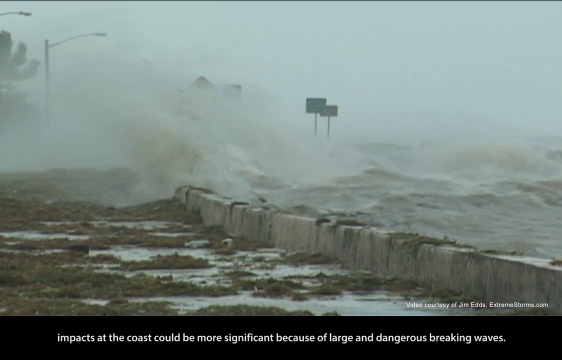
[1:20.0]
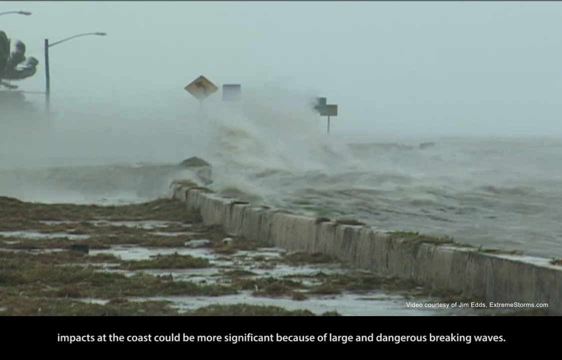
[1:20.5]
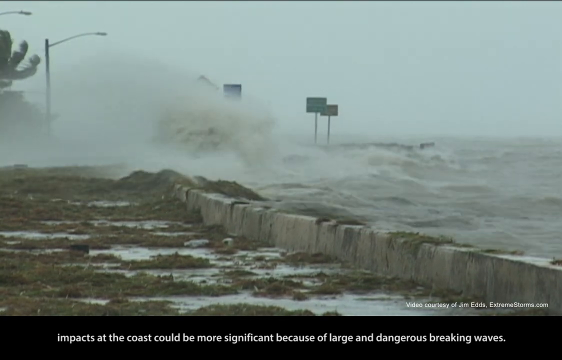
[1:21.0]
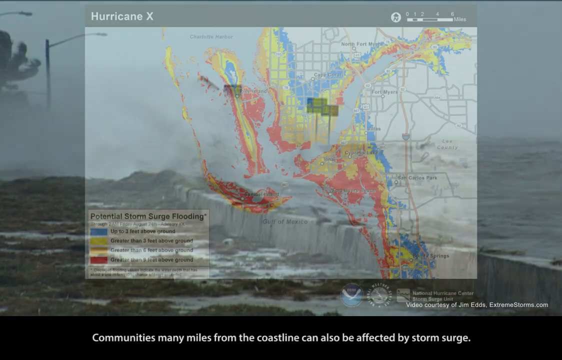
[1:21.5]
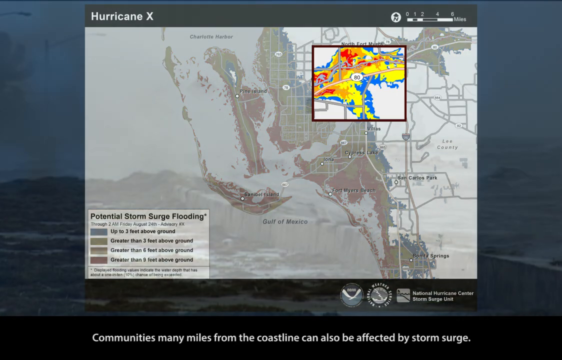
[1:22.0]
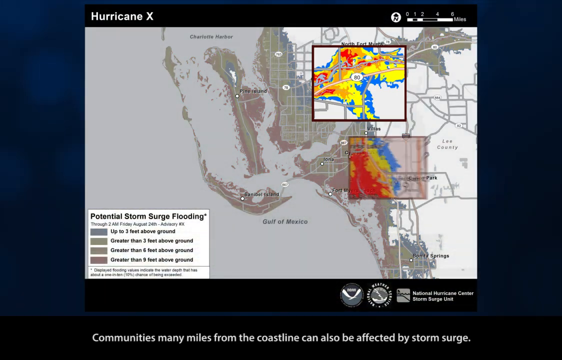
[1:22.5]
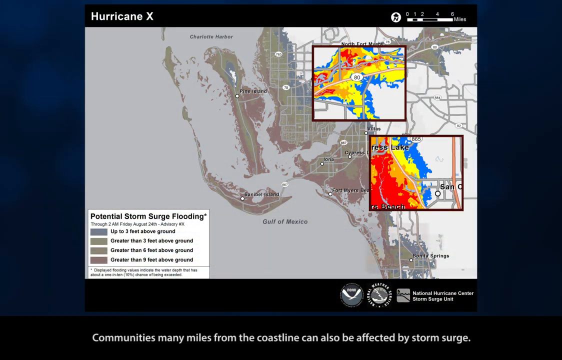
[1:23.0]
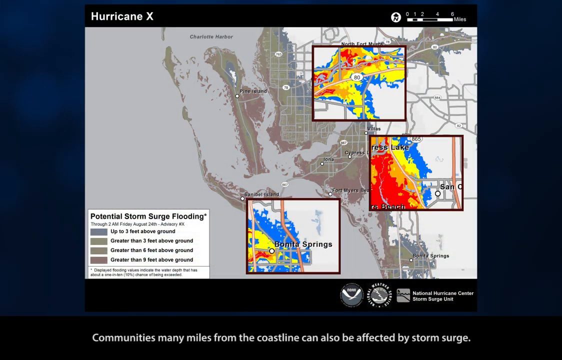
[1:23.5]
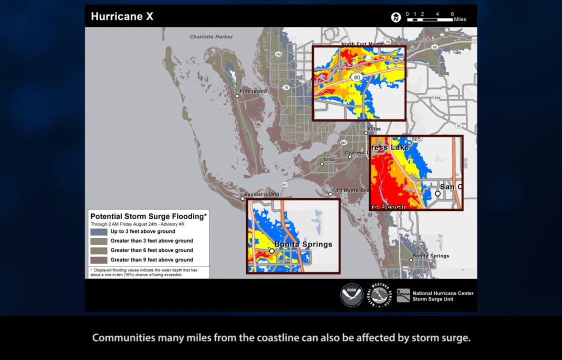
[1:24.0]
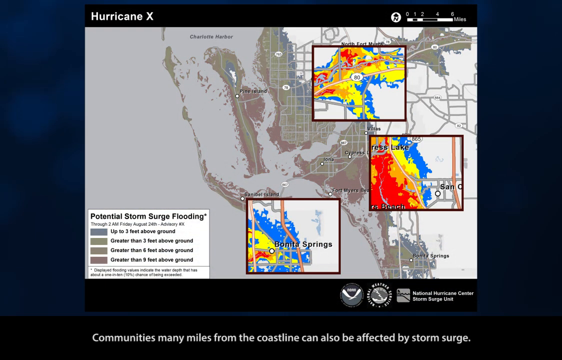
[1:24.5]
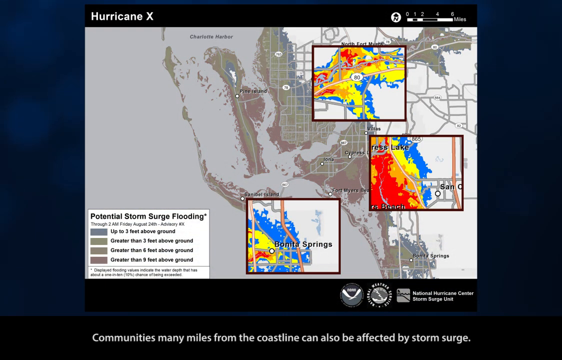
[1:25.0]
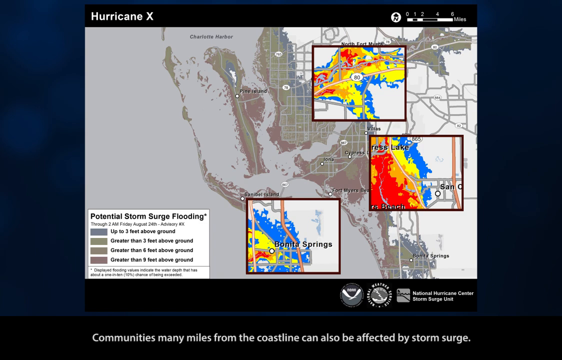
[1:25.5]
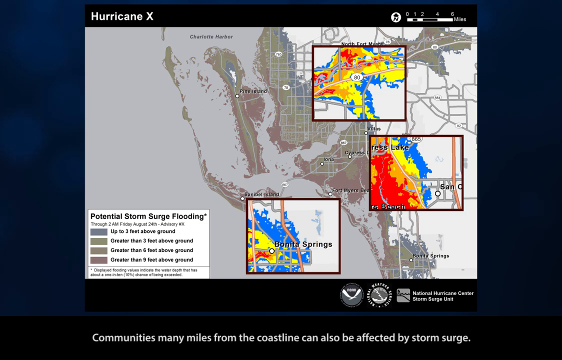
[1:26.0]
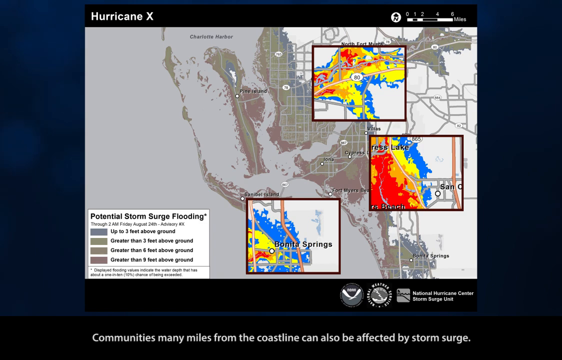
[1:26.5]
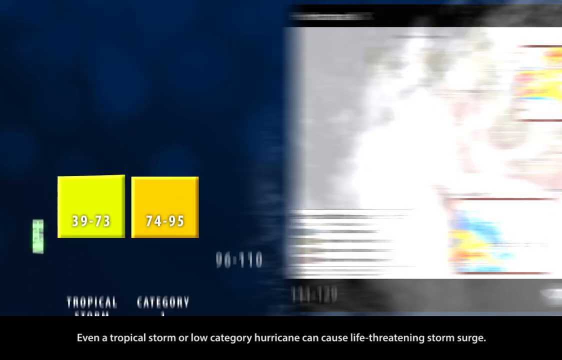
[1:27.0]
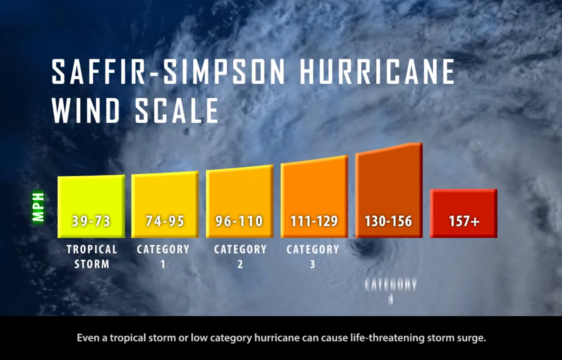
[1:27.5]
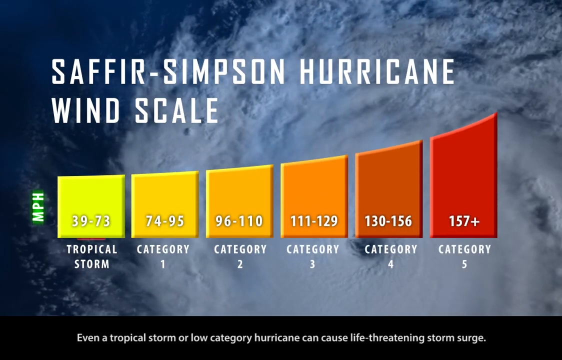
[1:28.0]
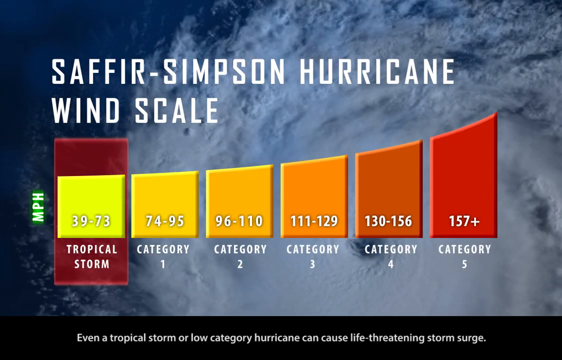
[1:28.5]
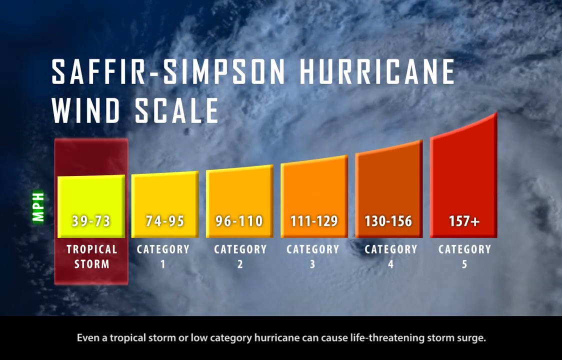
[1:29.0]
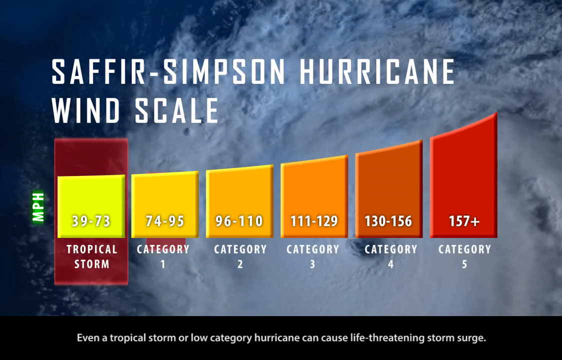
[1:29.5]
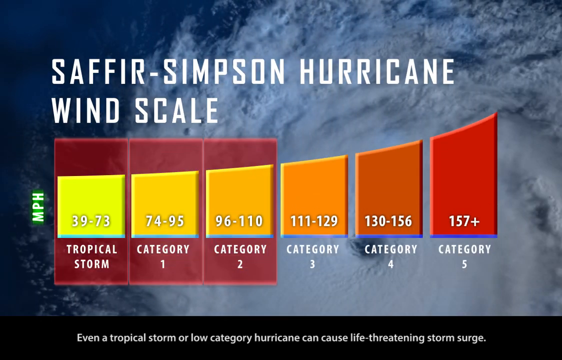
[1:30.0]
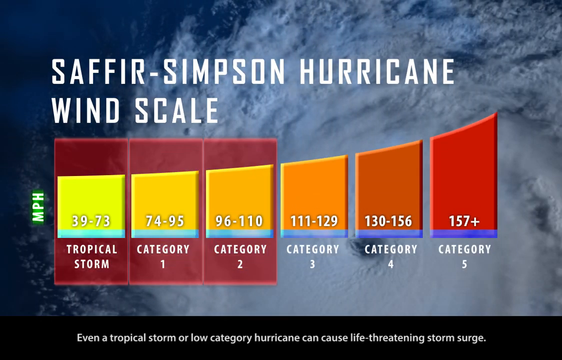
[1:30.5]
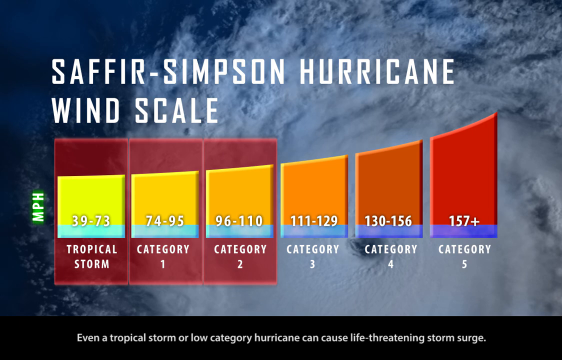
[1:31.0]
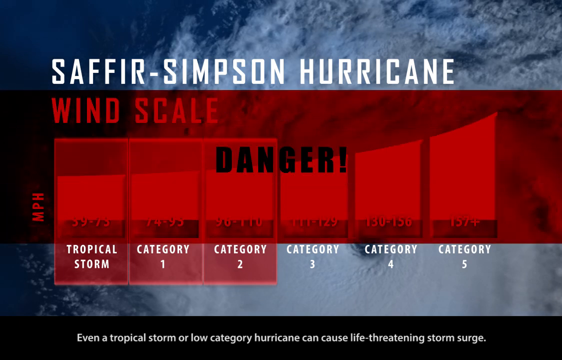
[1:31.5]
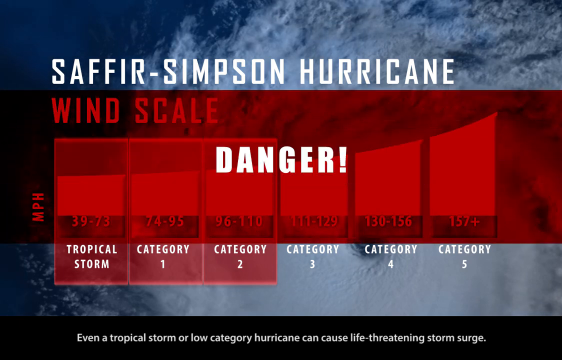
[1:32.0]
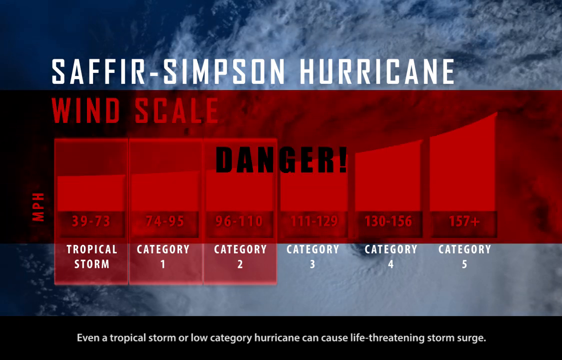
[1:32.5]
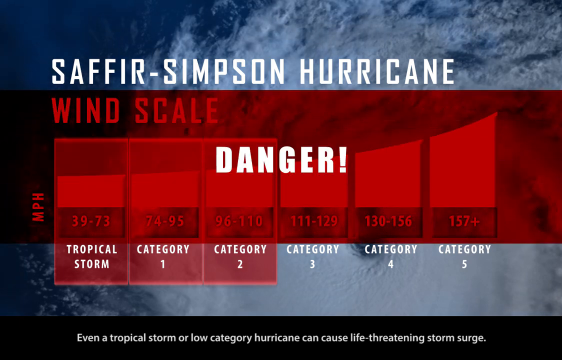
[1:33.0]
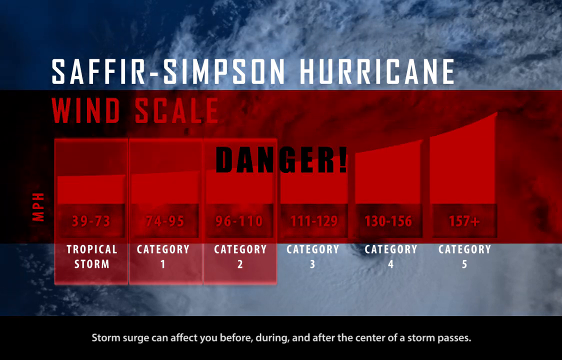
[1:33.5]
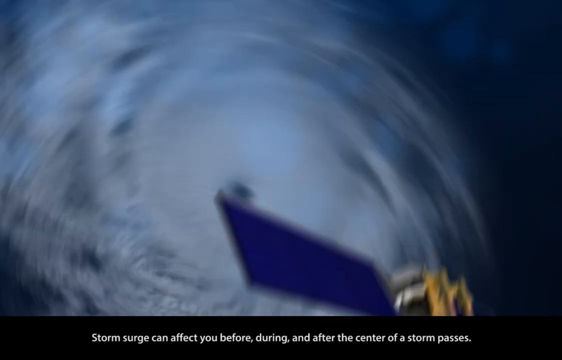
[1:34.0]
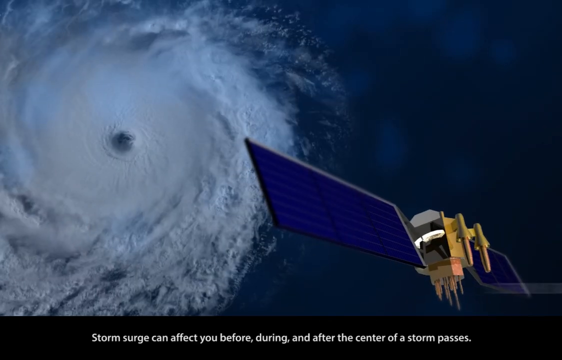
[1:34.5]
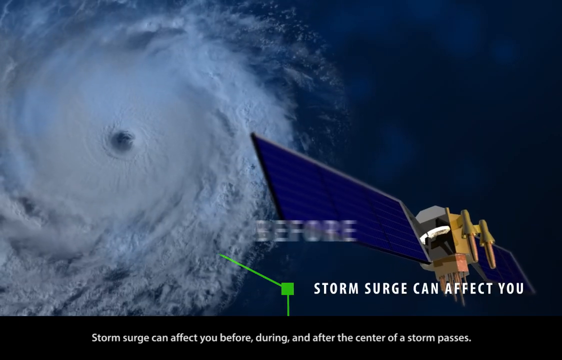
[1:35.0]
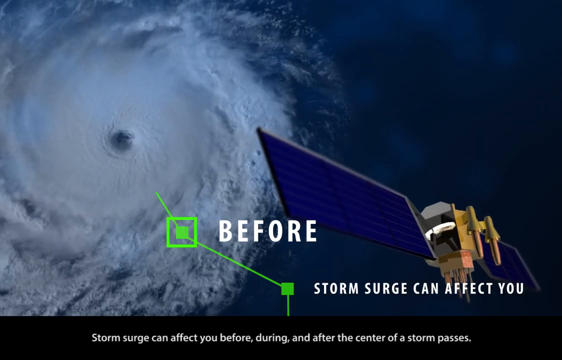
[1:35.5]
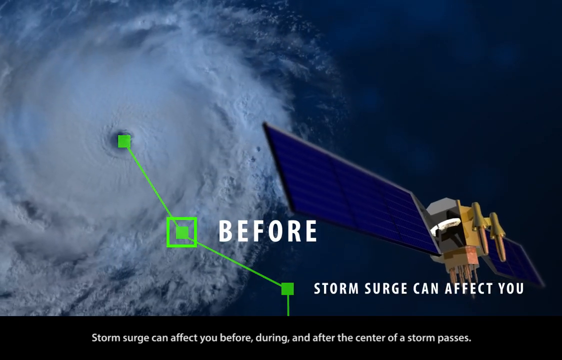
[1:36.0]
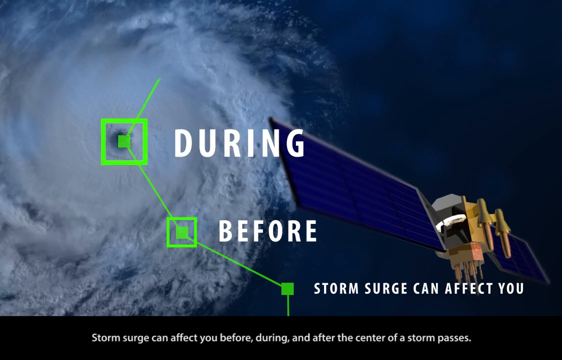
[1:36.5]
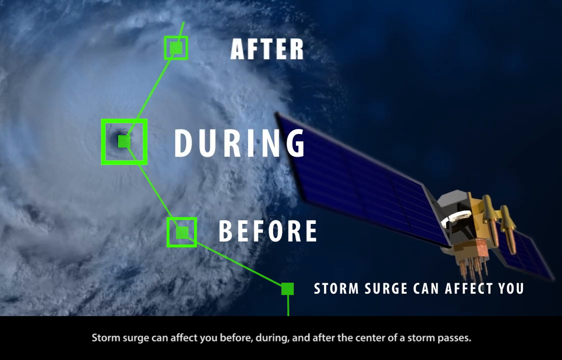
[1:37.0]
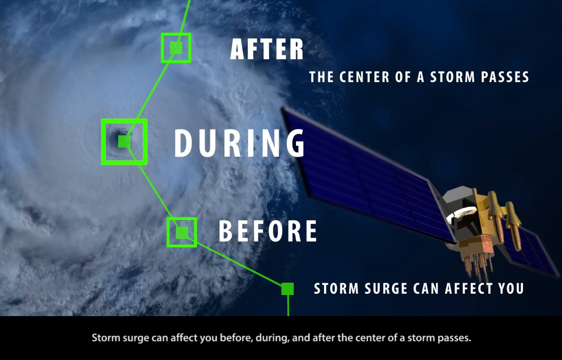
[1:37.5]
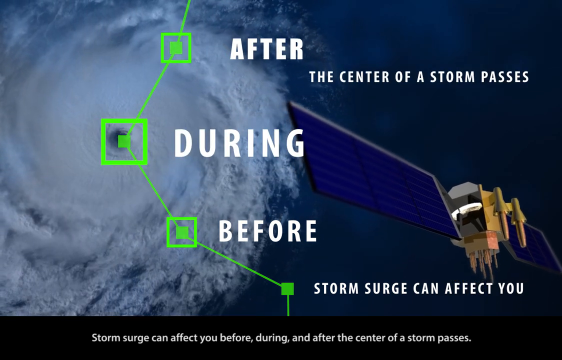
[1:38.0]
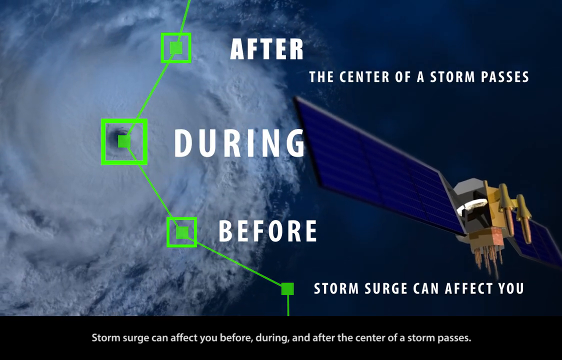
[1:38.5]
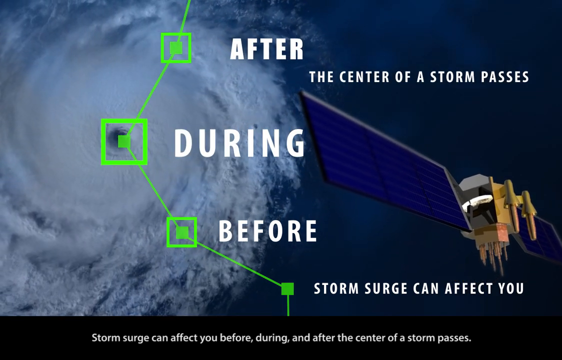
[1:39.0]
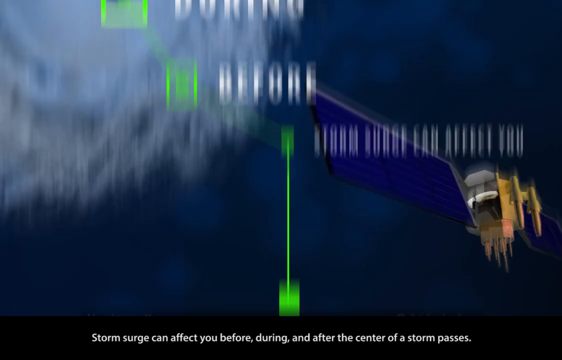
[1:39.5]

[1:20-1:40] A map is followed by three squares showing three different parts of the map. A Saffir-Simpson hurricane wind scale lists a tropical storm as 39 to 73, category one as 74 to 95, category two as 96 to 110, category three as 111 to 129, category four as 130 to 156, and category five as 157-plus miles per hour. Red appears with "danger" flashing; for tropical storm, one and two, "danger" is in black lettering and flashes. Text says a storm surge can affect you before, during and after. A picture from space says "the center of a storm passes" with after, during and before labels for when storm surge can affect you, lit green with dots. Damage follows, with the storm surge breaking a concrete wall; signs are in the background, trees blow, and the wall breaks into pieces from the heavy water. The potential storm surge flooding map appears with its different colors. The miles per hour for each storm category and the danger levels are displayed again.